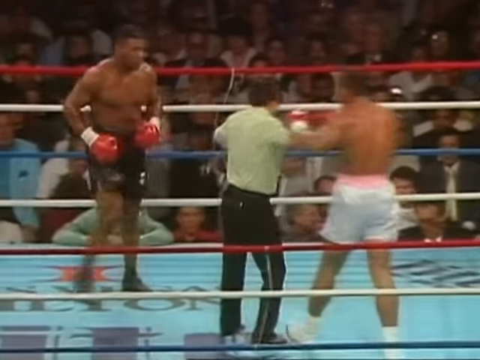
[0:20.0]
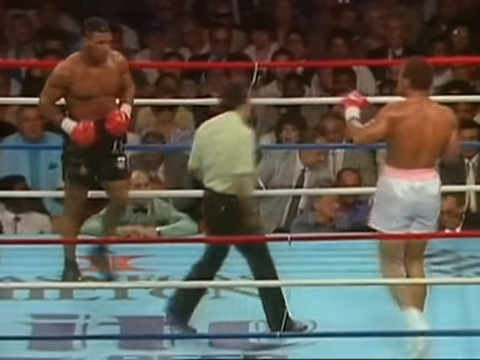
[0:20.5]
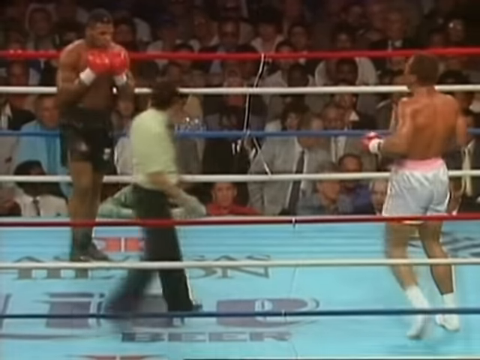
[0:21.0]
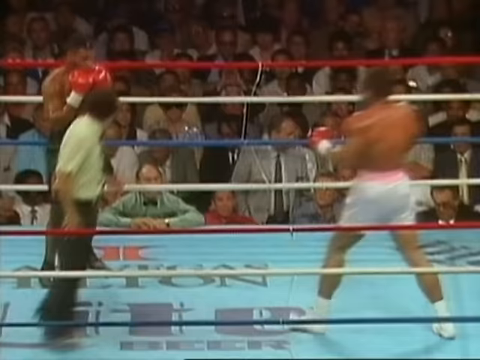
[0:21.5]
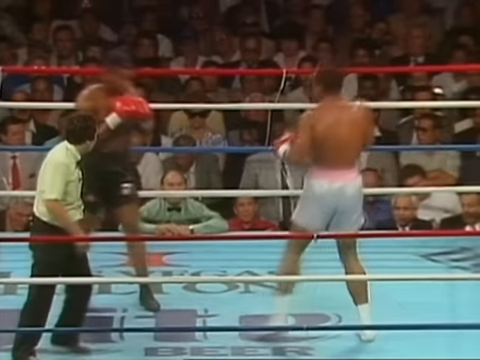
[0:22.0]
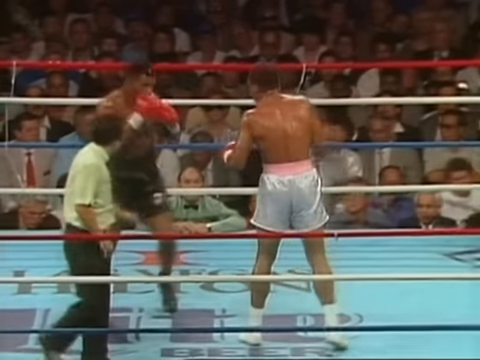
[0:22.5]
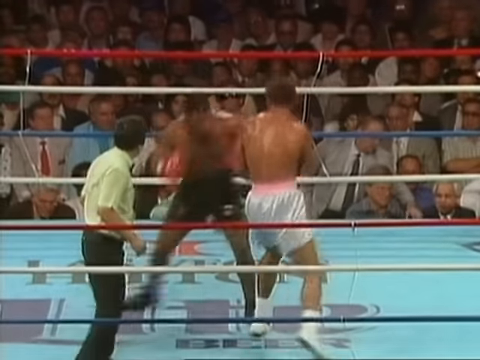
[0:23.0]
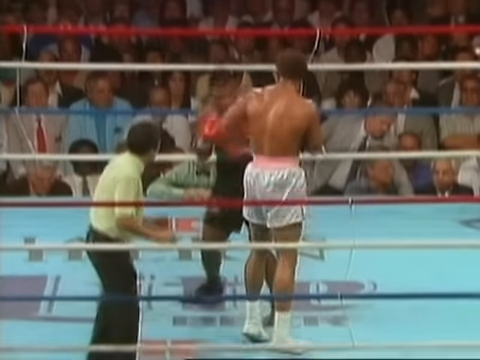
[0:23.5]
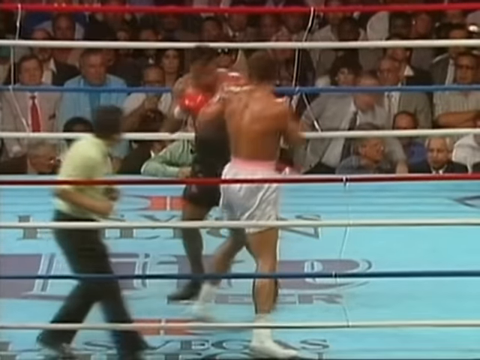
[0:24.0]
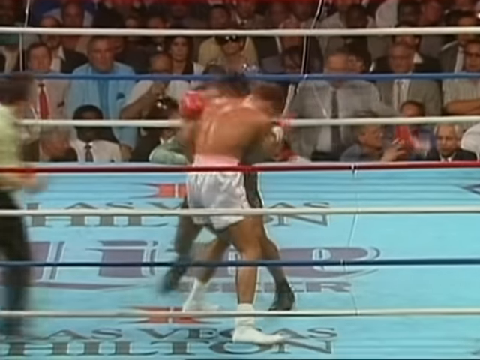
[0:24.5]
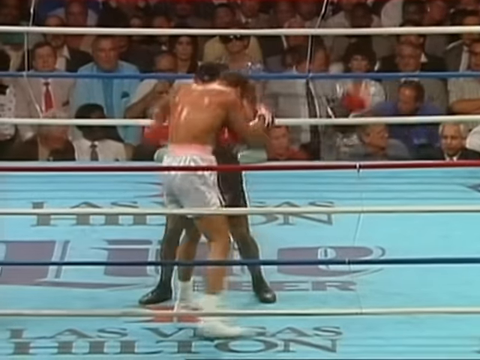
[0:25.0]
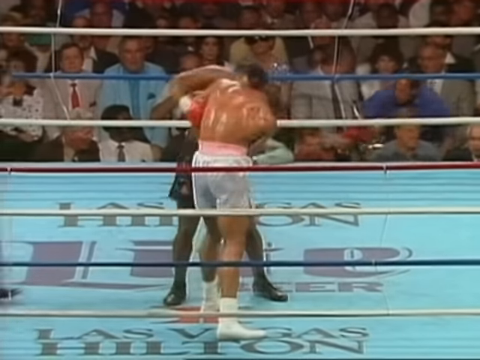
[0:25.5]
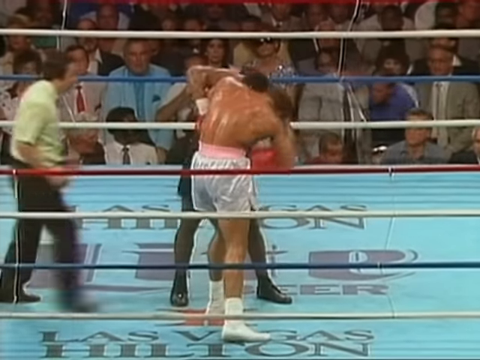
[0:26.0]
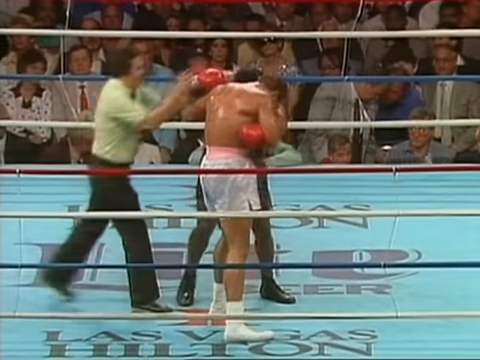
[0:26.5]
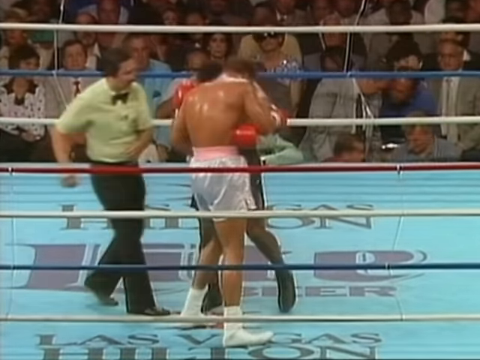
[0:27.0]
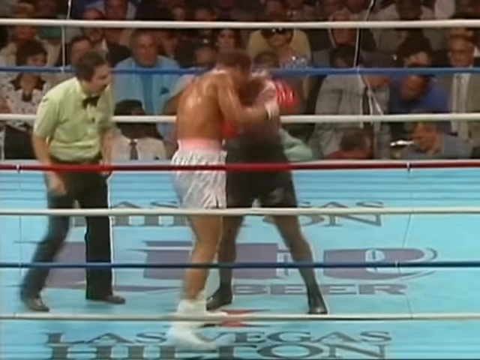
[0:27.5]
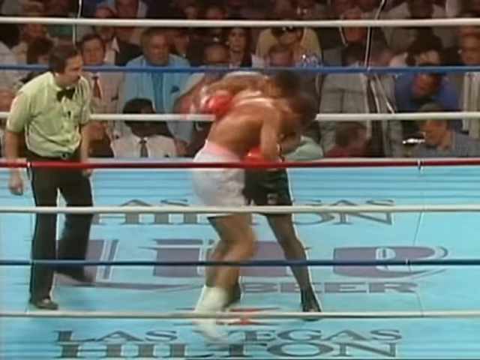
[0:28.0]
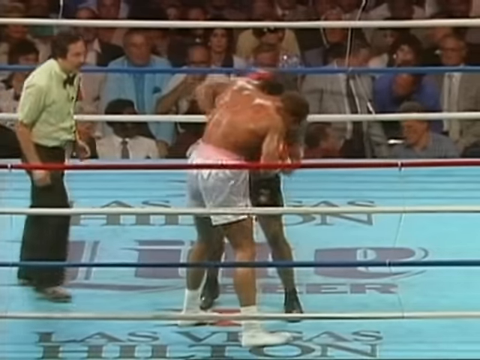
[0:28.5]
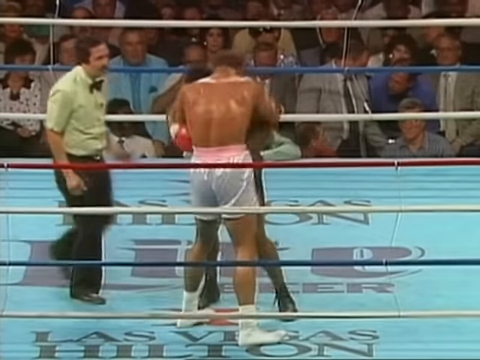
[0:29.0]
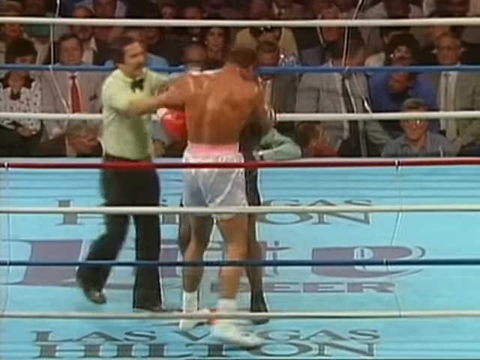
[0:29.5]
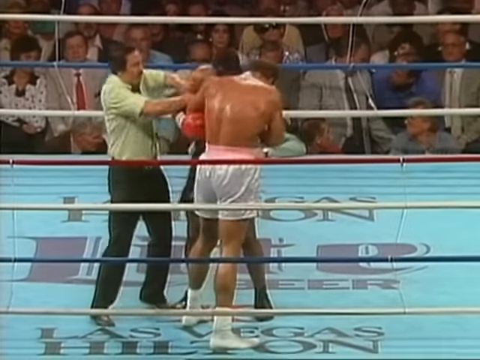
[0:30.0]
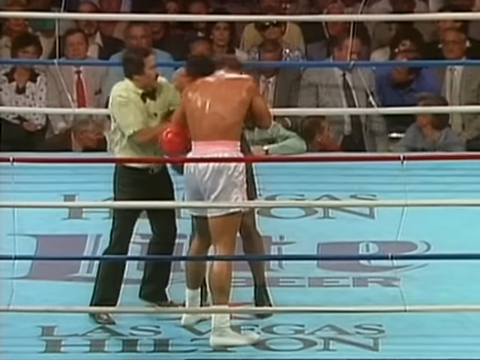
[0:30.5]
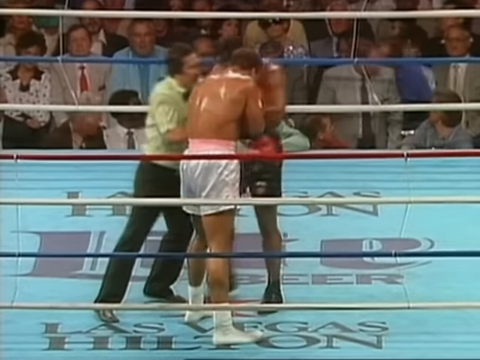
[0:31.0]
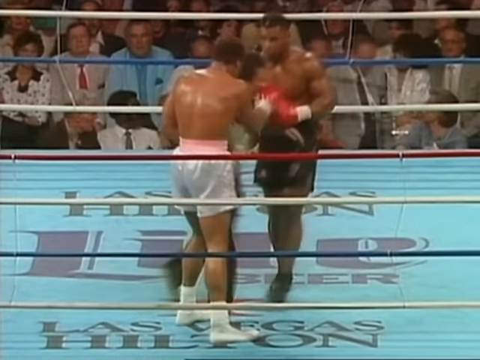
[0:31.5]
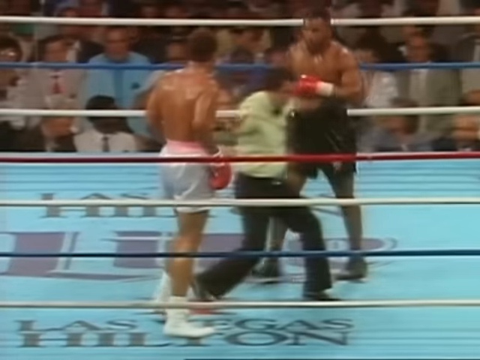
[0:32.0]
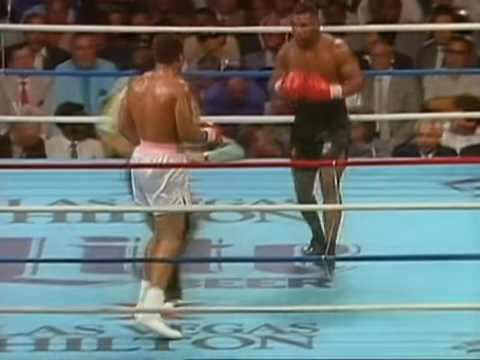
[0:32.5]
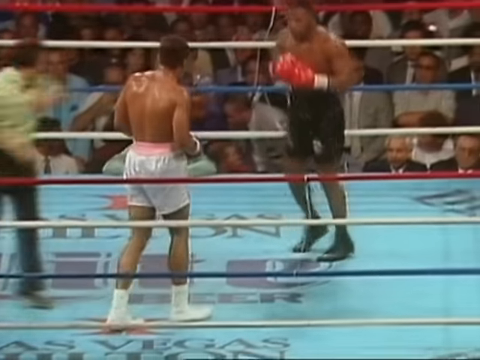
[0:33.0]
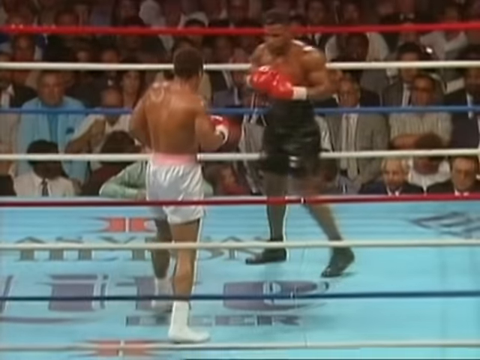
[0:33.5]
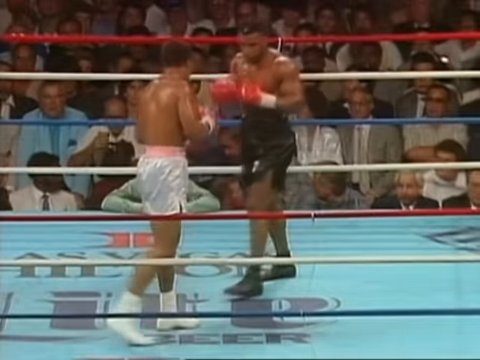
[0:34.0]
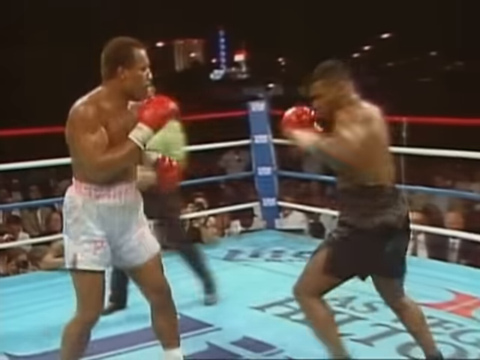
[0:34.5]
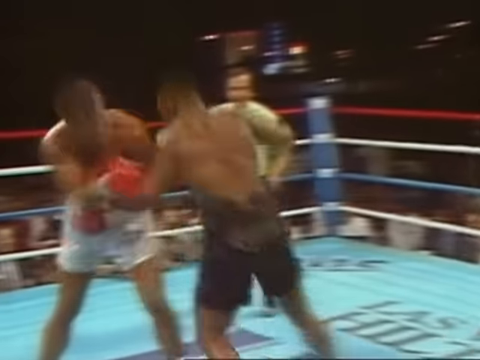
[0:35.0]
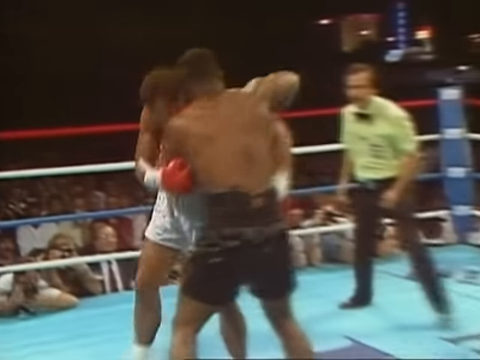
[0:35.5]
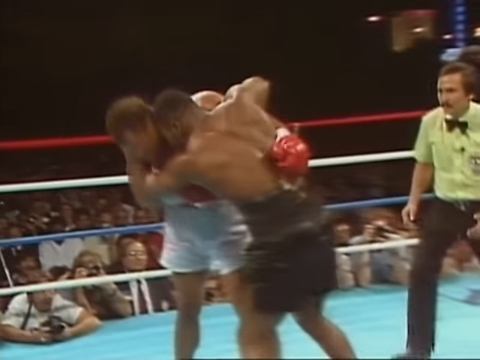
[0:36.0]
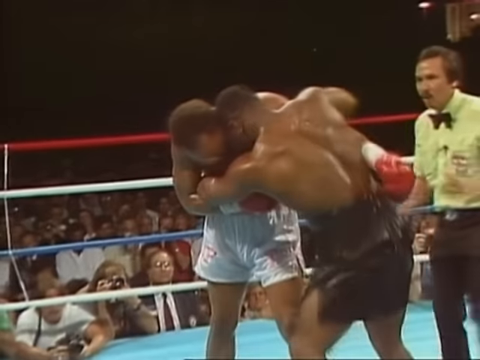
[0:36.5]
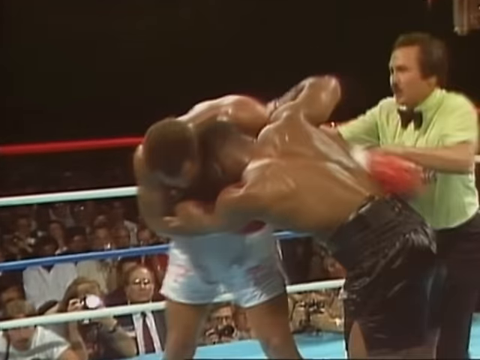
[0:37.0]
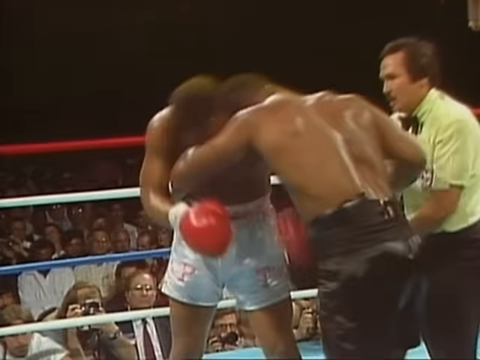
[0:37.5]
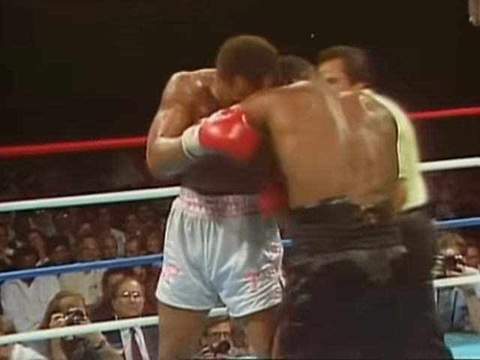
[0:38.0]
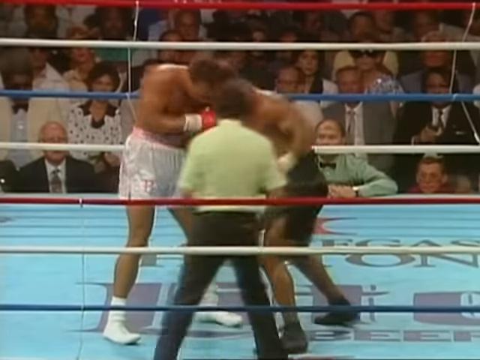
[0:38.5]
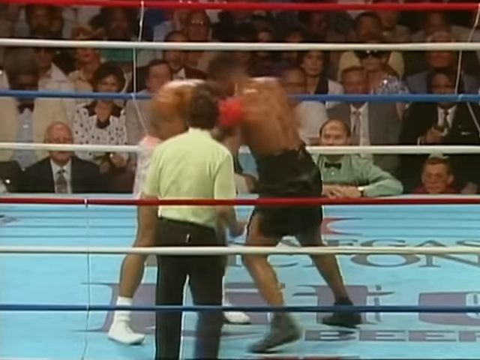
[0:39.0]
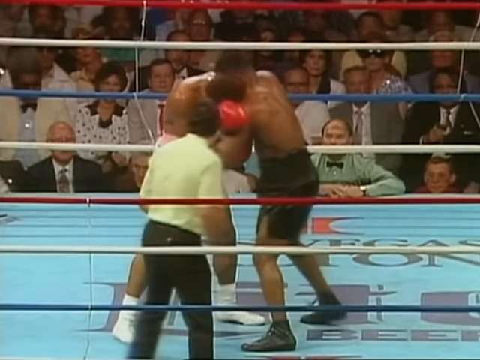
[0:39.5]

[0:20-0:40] The referee, having broken up the scuffle, backs up, and the fighters come together again. Tyson, the boxer in black trunks, grabs the other boxer near the ropes and they wrestle a little. The referee comes in the middle and breaks it up, and they return to the center of the ring. Tyson fires kind of an undercut with his left hand, then the boxers come together again, grabbing each other. Tyson swings with his left and right at the other boxer's stomach area. Throughout, the boxers keep coming together and grabbing each other, and the referee has to break it up each time. The boxer in white trunks is not identifiable.